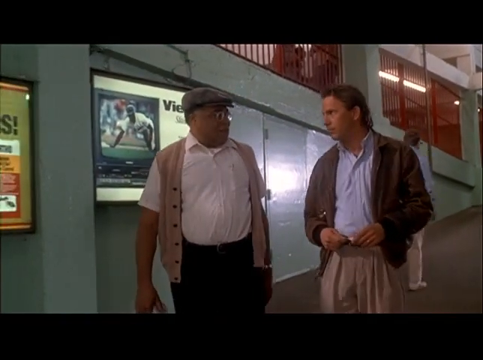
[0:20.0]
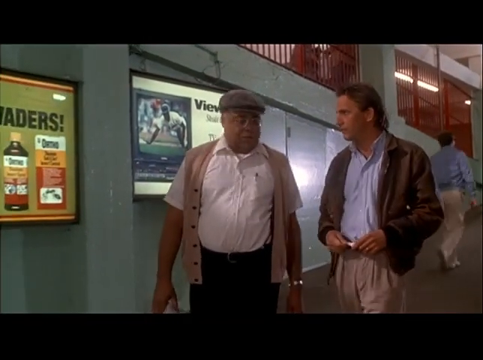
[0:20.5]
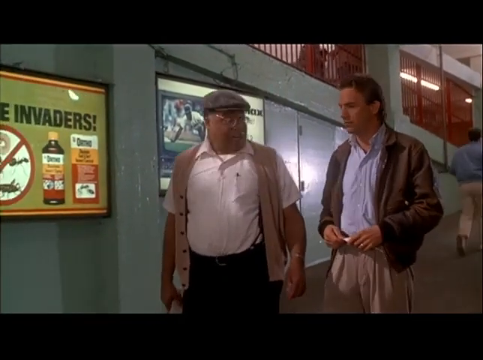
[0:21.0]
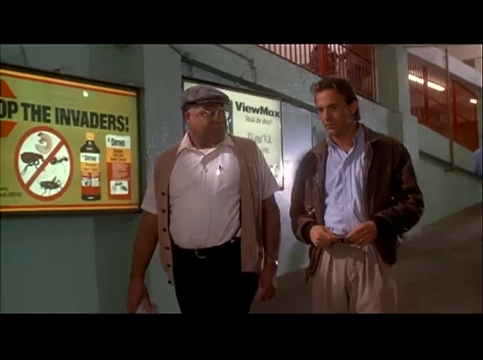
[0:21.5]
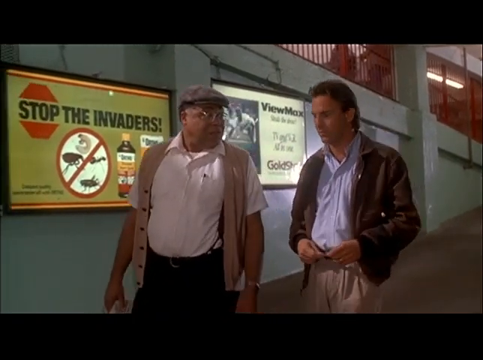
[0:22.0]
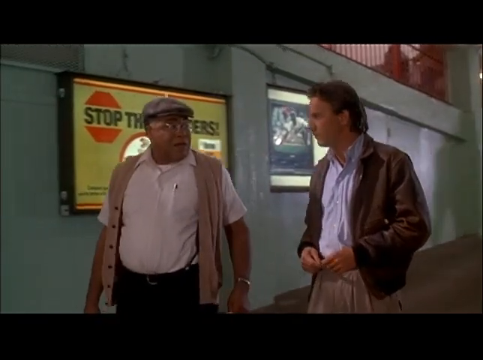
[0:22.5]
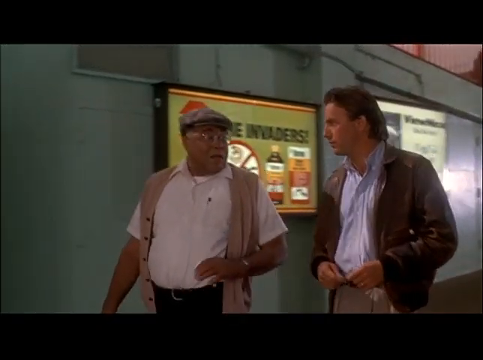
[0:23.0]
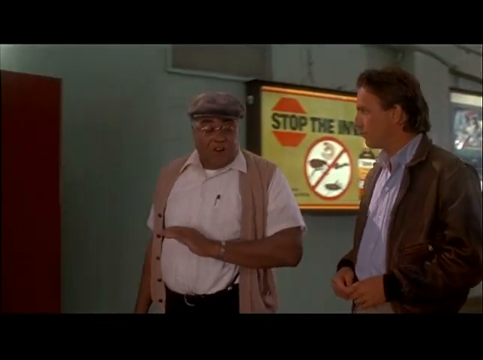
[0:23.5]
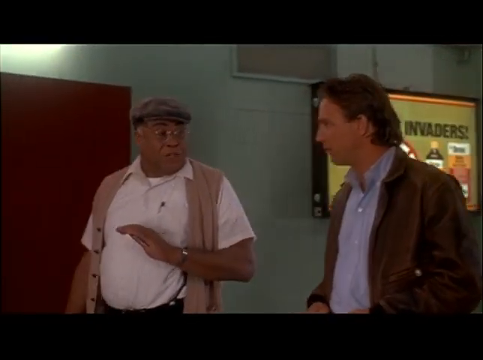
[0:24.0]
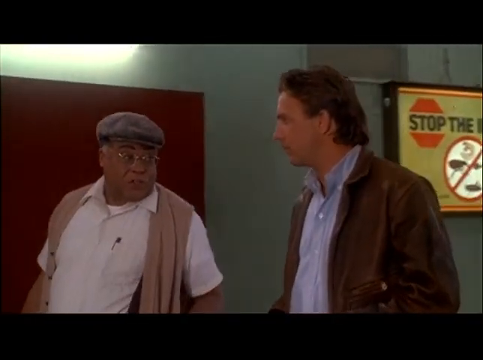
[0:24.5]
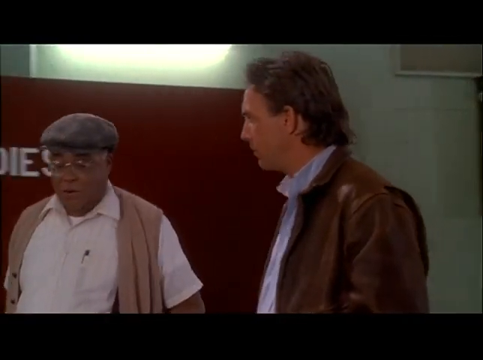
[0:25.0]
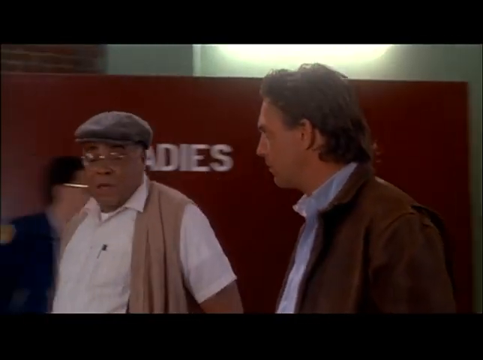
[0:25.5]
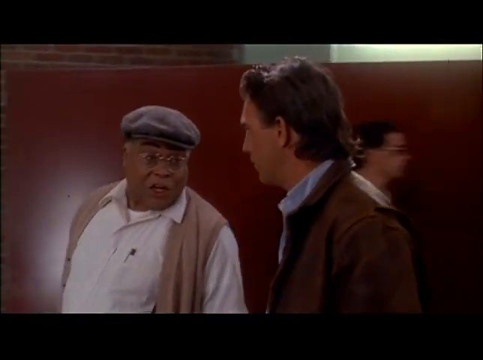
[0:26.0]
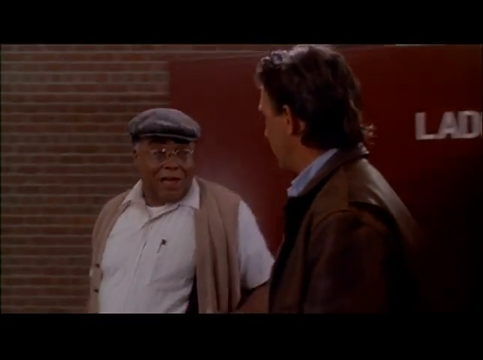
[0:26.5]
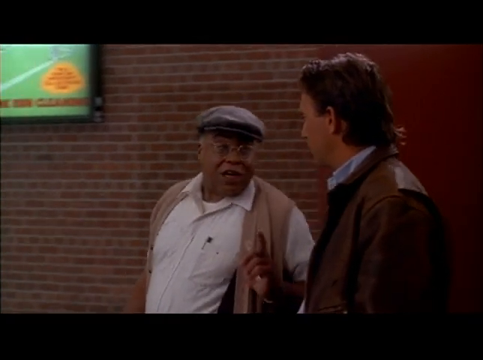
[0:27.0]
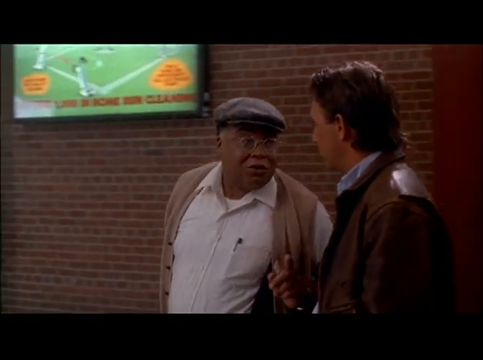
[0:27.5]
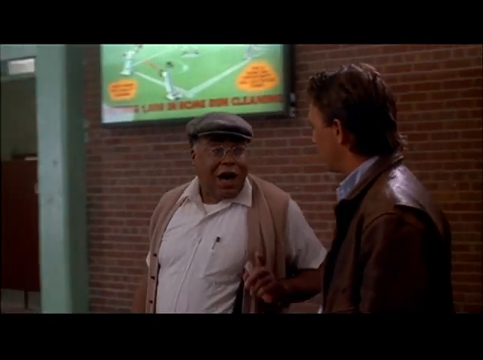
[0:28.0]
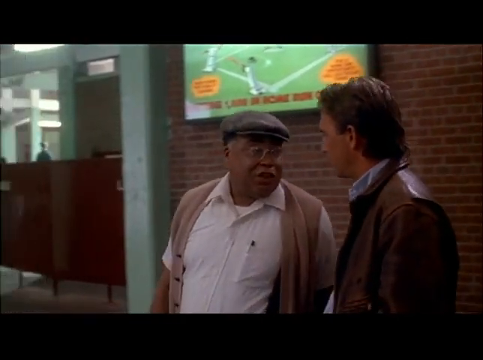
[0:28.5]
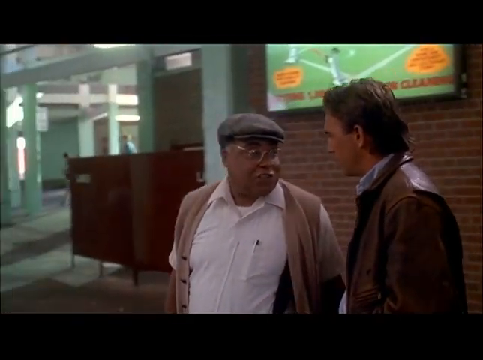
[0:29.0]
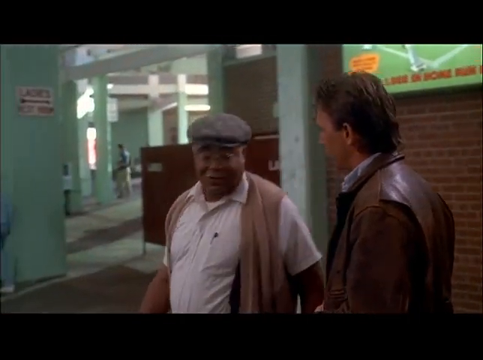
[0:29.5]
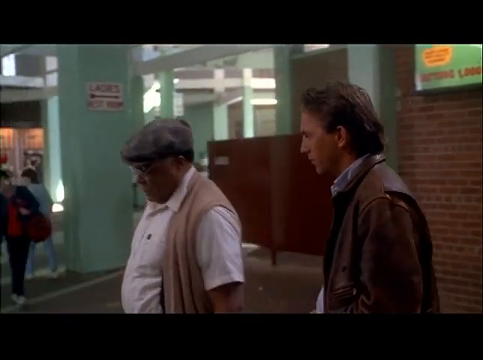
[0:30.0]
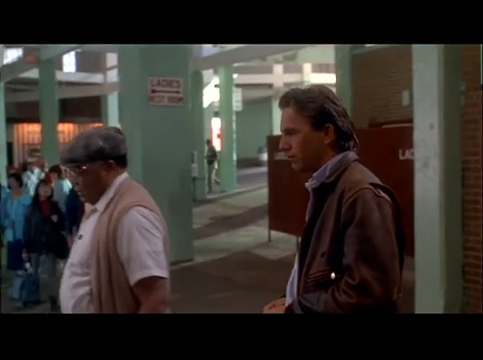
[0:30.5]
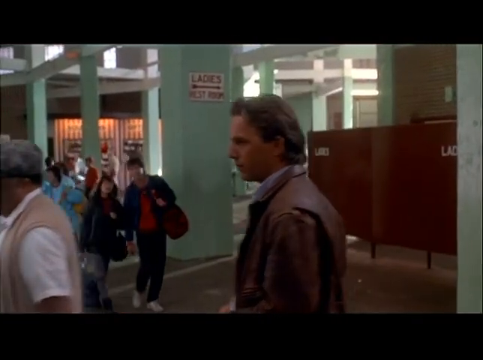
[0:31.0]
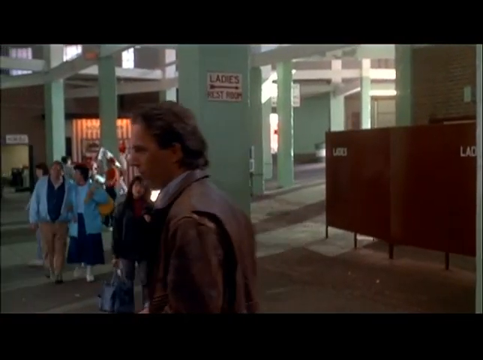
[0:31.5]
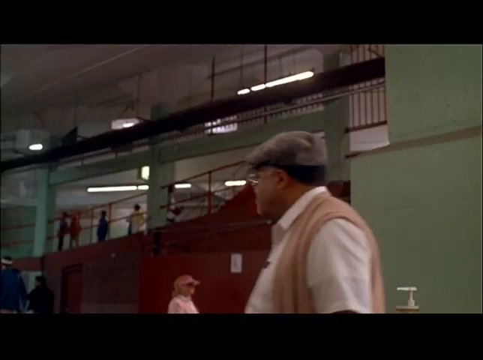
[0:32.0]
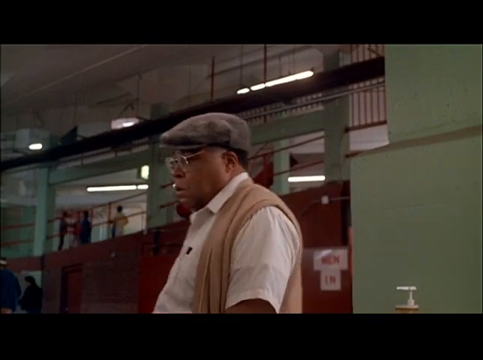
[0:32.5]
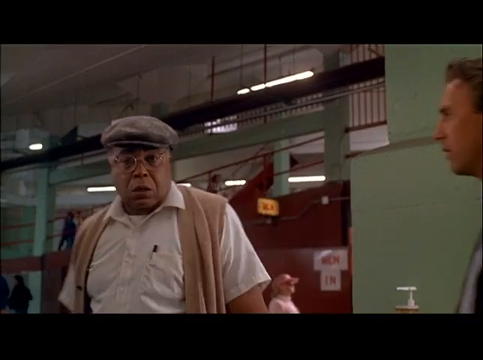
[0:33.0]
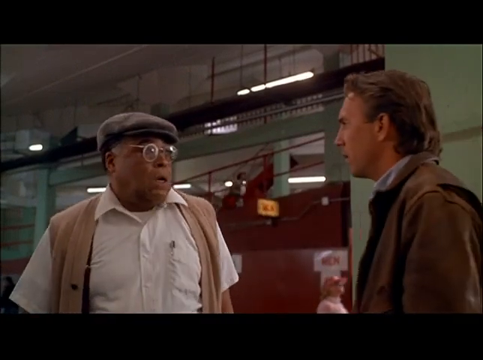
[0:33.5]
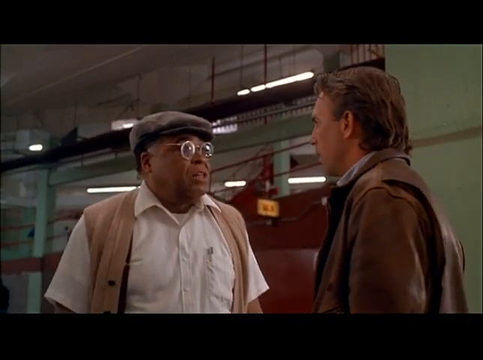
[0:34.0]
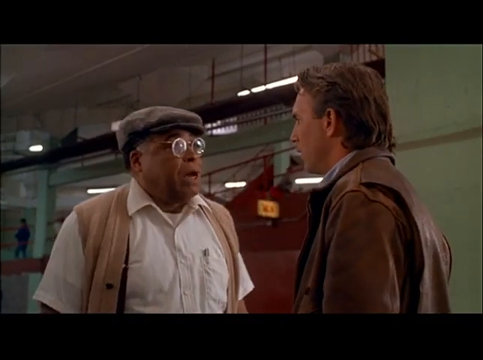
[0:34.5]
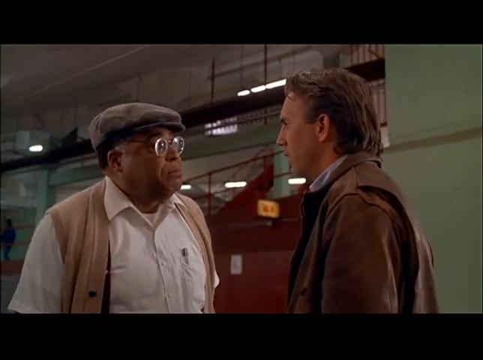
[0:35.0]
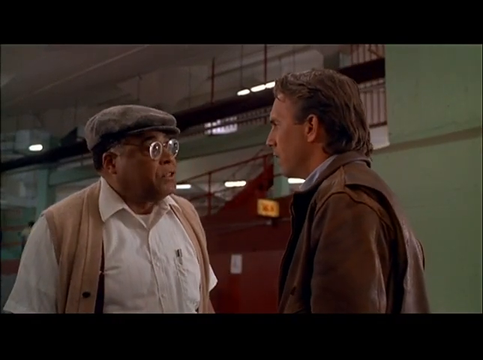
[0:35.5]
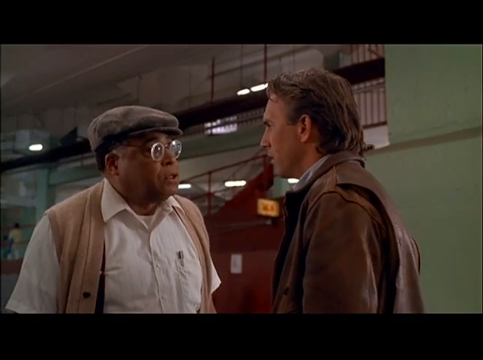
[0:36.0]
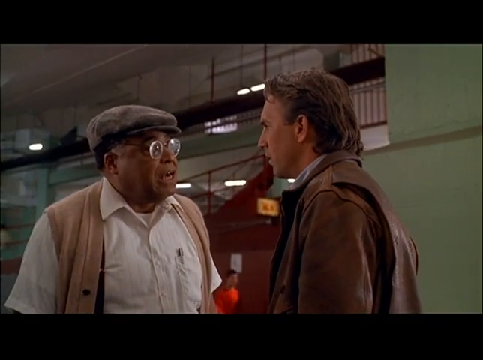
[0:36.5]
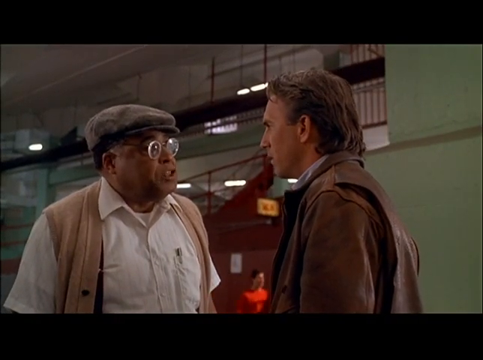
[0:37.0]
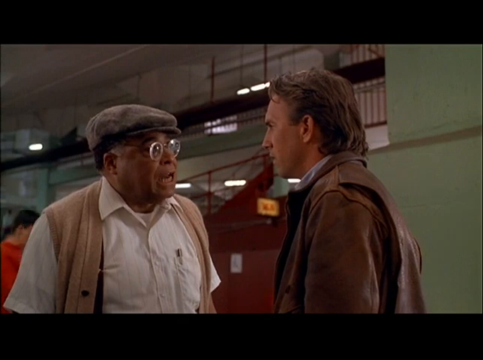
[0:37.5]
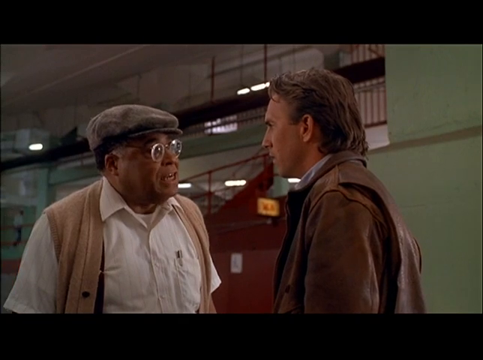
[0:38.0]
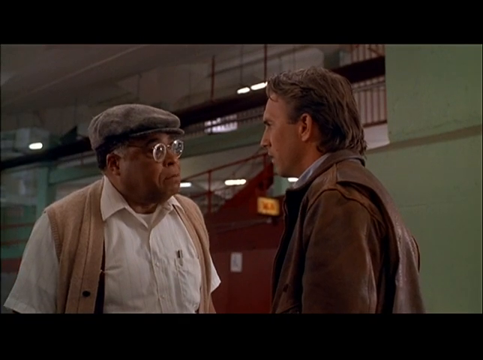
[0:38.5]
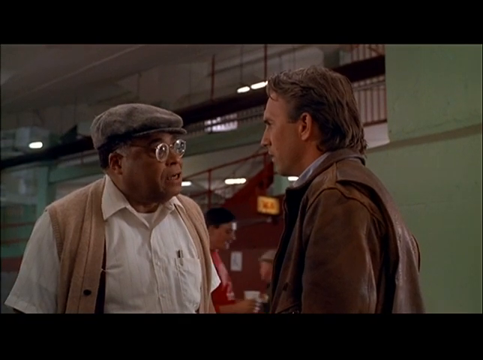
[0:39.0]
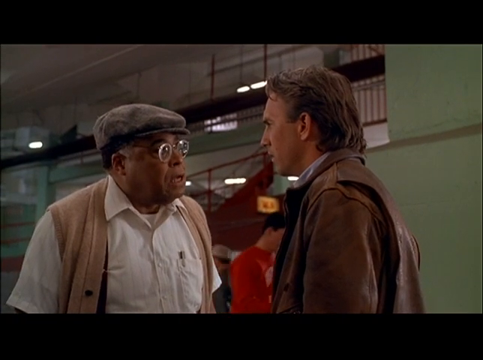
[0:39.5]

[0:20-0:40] Two adult men are fairly close to the camera. In the center of the screen is a man of African descent who looks like James Earl Jones, wearing a gray type of cap, glasses, a white button-up shirt with a pin in the left chest pocket, a light brown or tan vest over the shirt, and black pants with a black belt. He looks to his left at a Caucasian man about one foot away; they are beside each other, walking down a cement walkway. The Caucasian man, who looks like Kevin Costner, has kind of blondish brown hair of a darker shade and wears a blue button-up shirt, a brown-looking bomber jacket of either leather or pleather, and khaki pants with a dark brown or black belt. The man of African descent is talking to him.